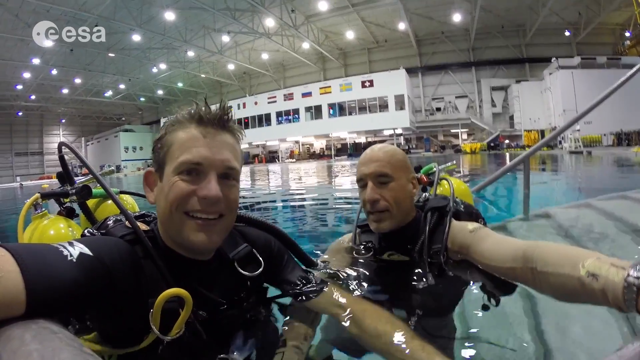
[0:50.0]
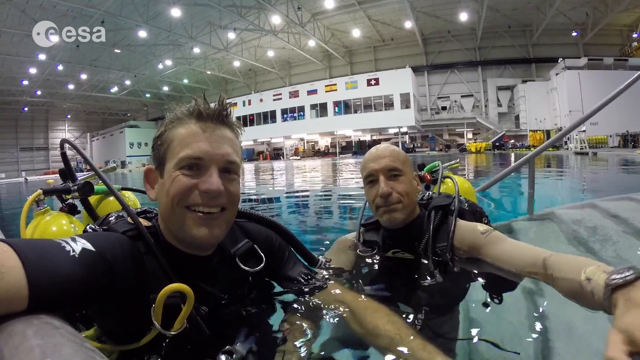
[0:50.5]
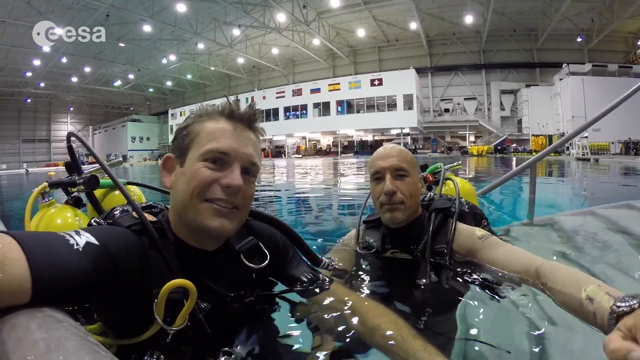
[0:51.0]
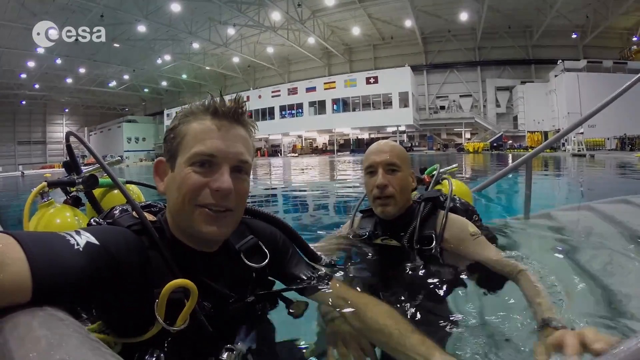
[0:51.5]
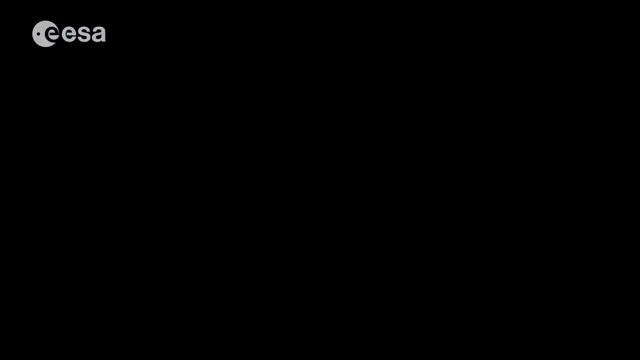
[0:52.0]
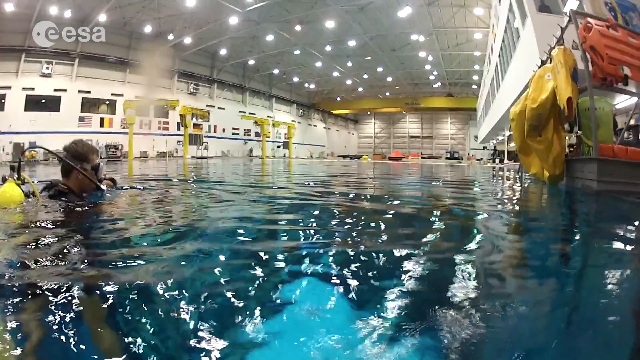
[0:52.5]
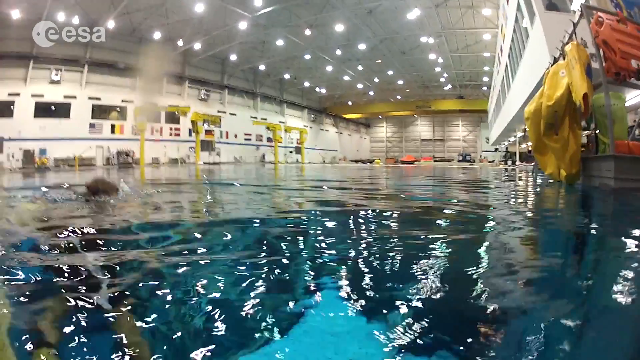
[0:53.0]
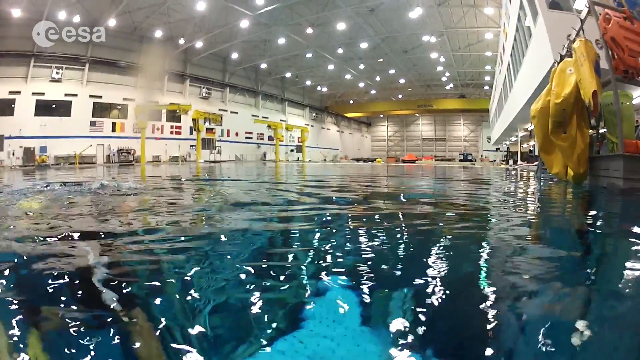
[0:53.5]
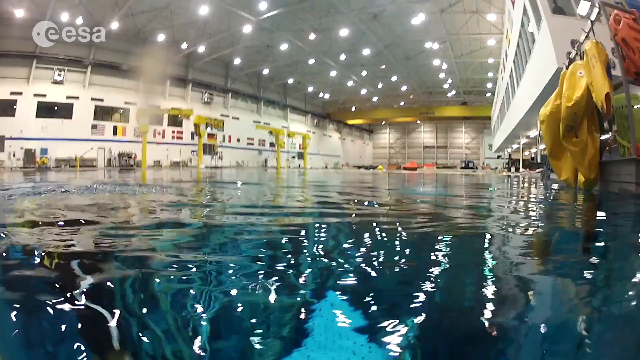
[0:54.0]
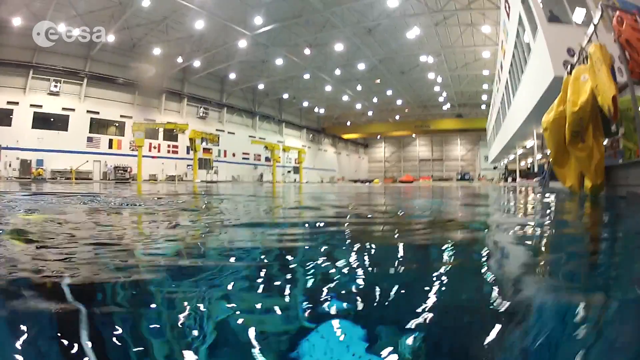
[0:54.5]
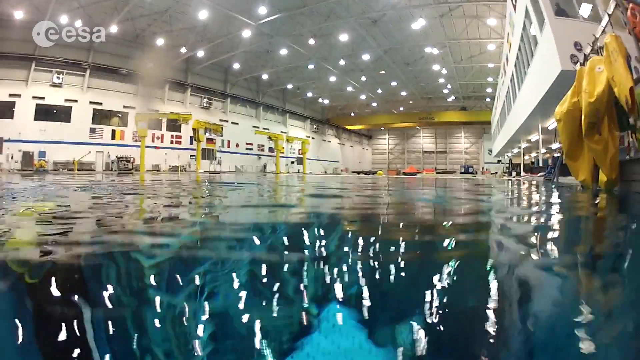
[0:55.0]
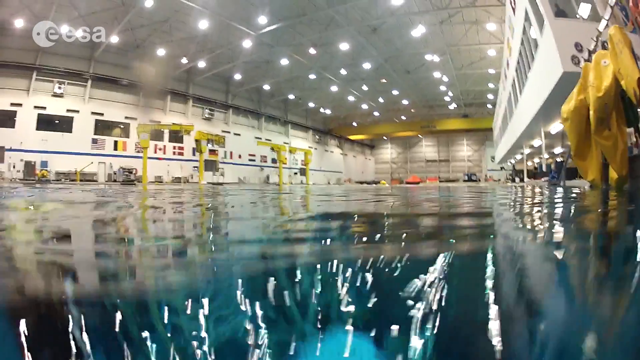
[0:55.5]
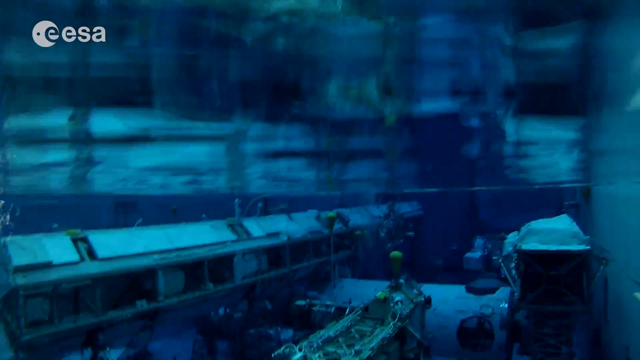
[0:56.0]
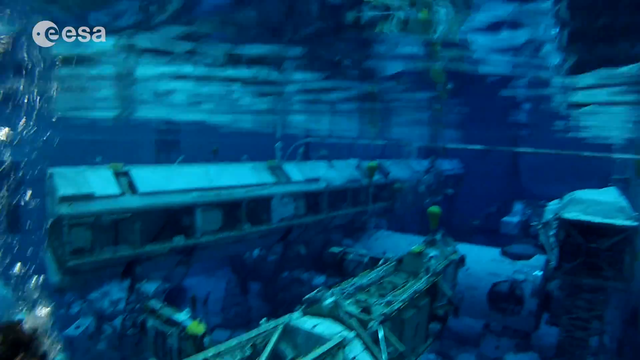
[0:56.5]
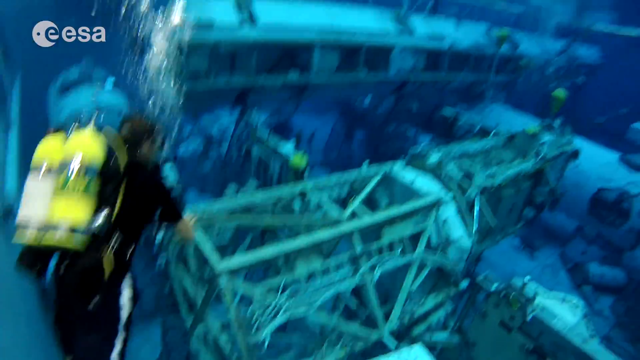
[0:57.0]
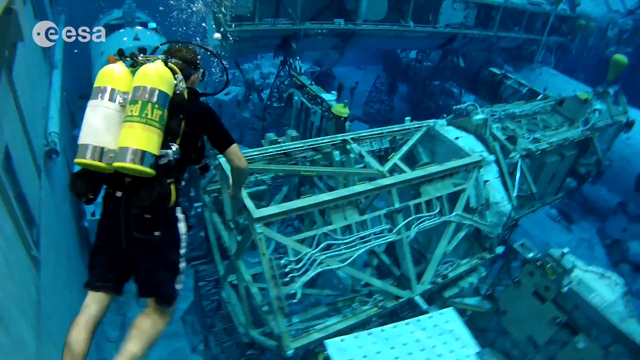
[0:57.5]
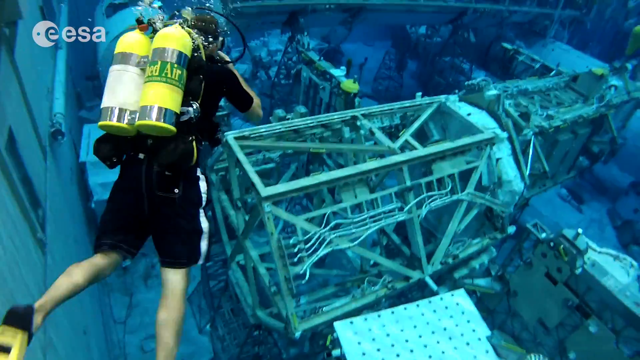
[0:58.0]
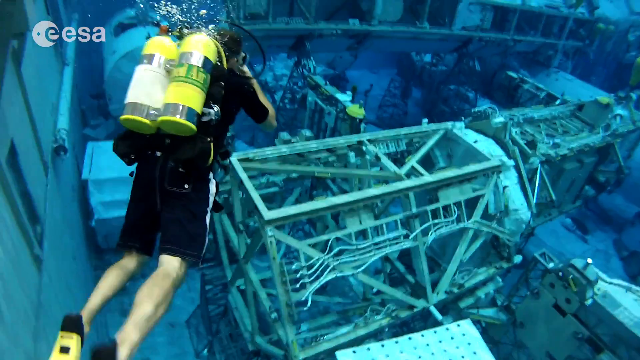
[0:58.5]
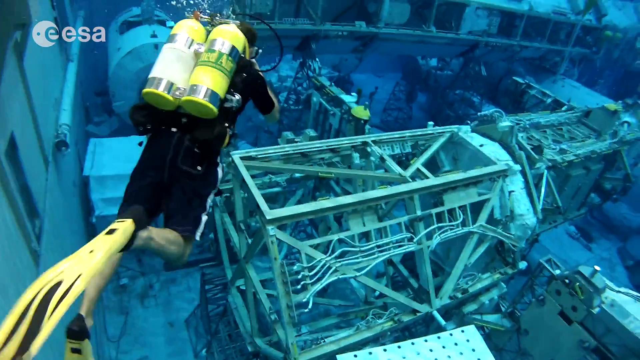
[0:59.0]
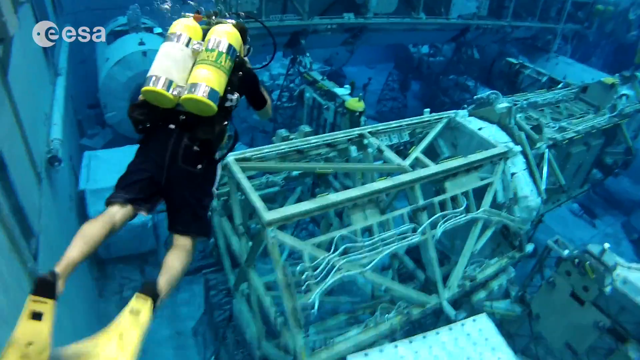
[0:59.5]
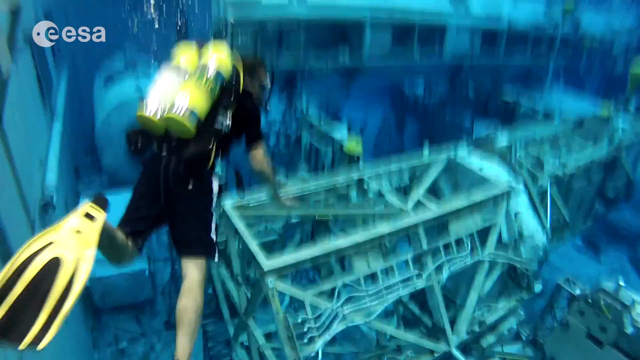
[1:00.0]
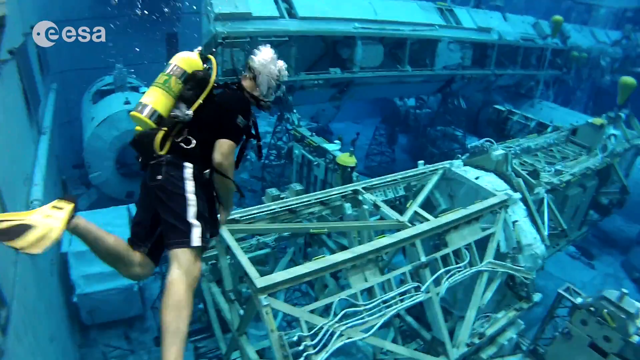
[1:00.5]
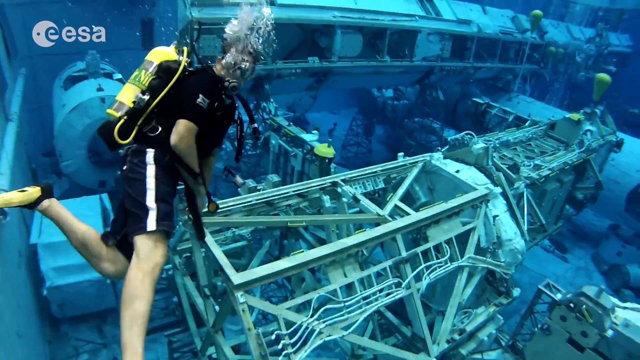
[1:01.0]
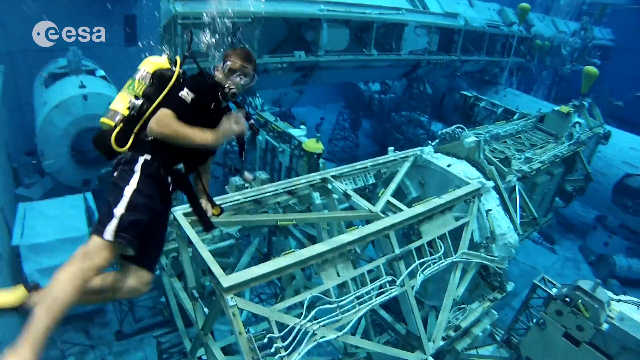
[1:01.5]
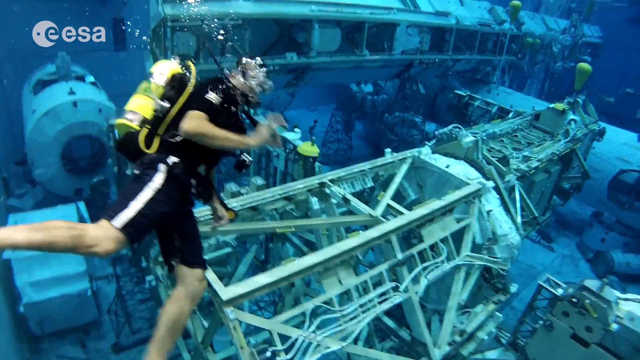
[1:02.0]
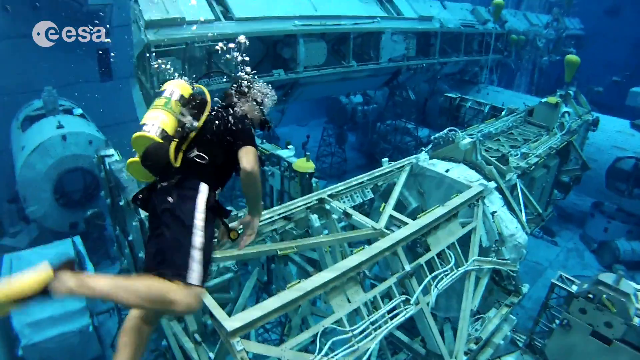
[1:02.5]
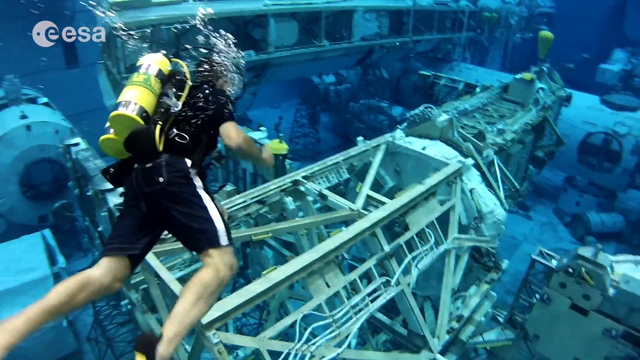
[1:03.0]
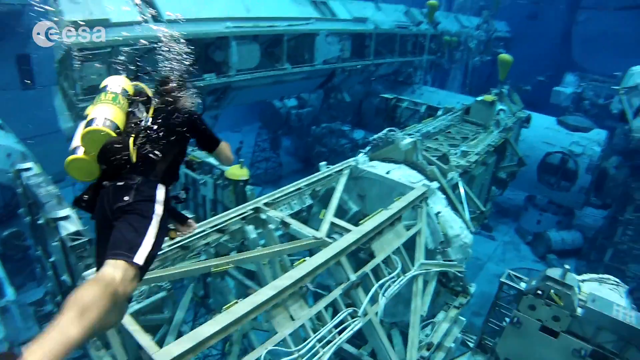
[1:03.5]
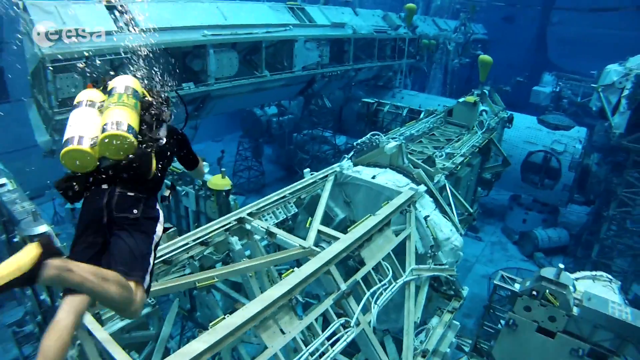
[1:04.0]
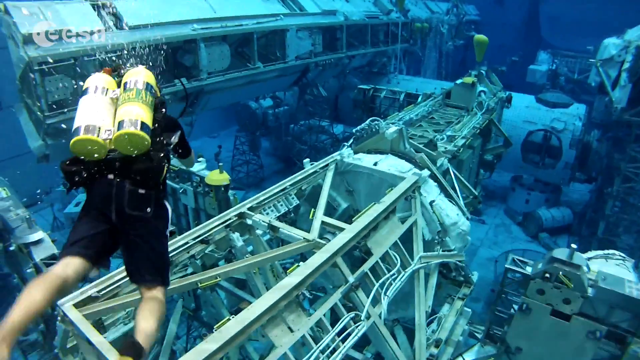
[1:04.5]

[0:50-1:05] The two men talk briefly, then they are in the water and go under. Beneath the surface is a whole lab, incredibly deep, almost like a little world of its own. As they descend, all kinds of lab equipment appear: metal and steel objects, cylinder-shaped things, wires, and different structures and skeleton-like frames. One diver sort of swims down to the very first structure, turns around, looks at the camera, makes the A-okay sign, and swims on a little further.